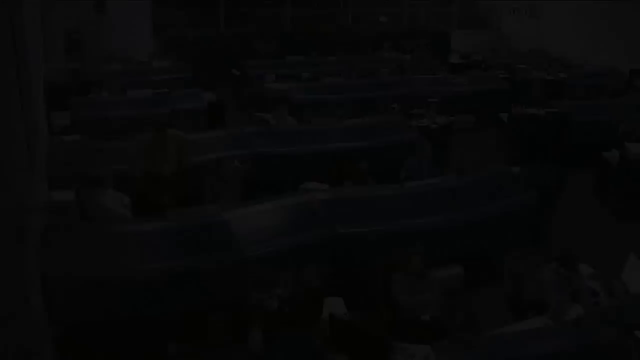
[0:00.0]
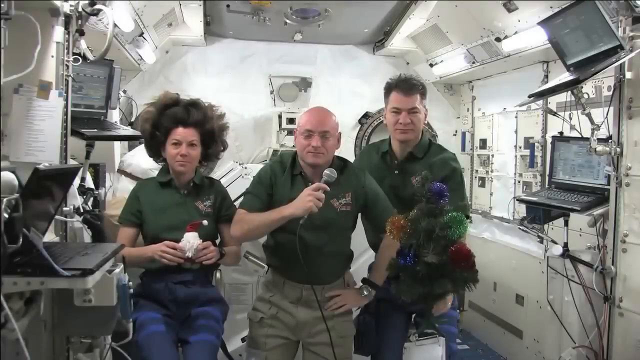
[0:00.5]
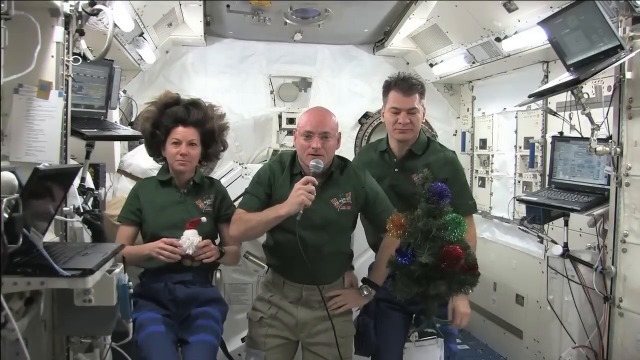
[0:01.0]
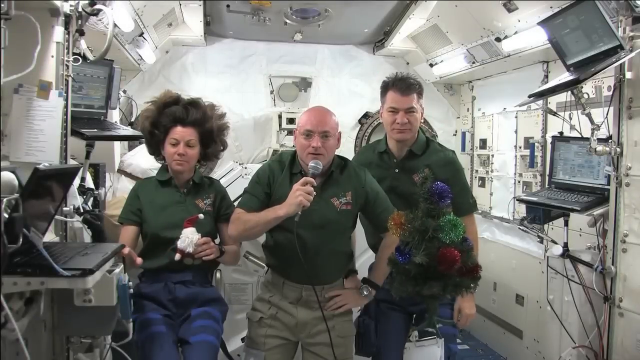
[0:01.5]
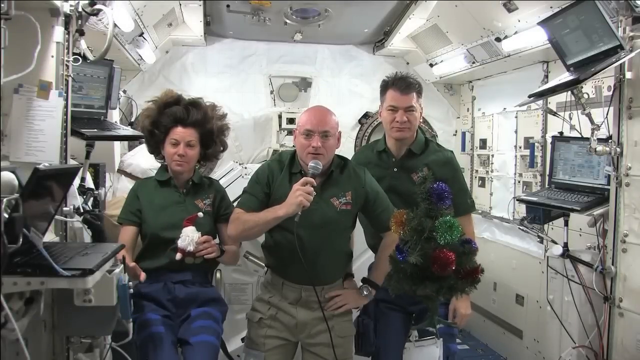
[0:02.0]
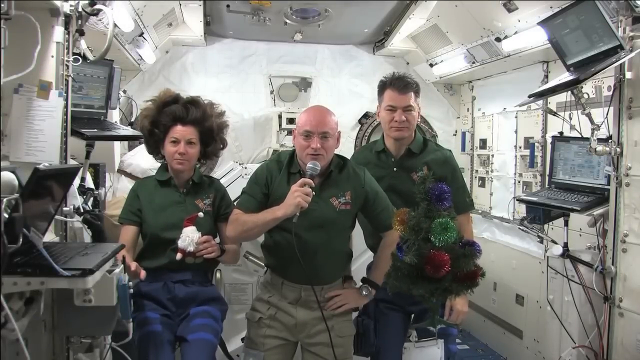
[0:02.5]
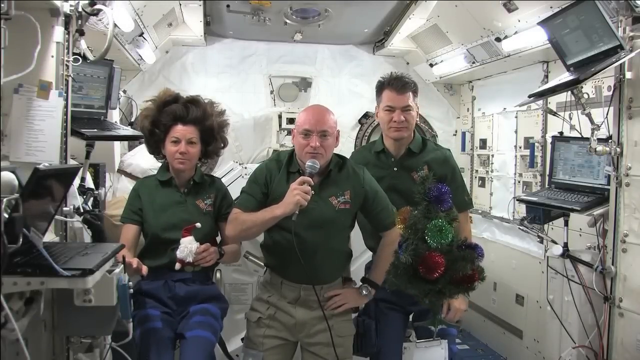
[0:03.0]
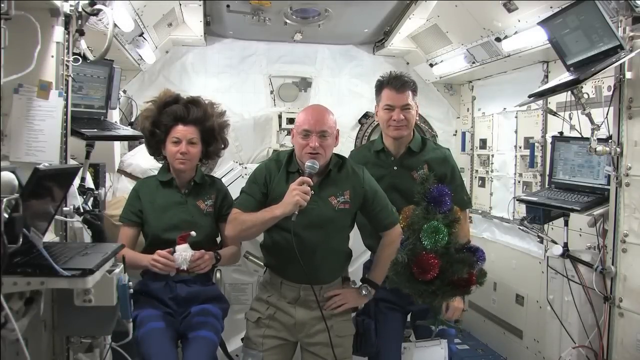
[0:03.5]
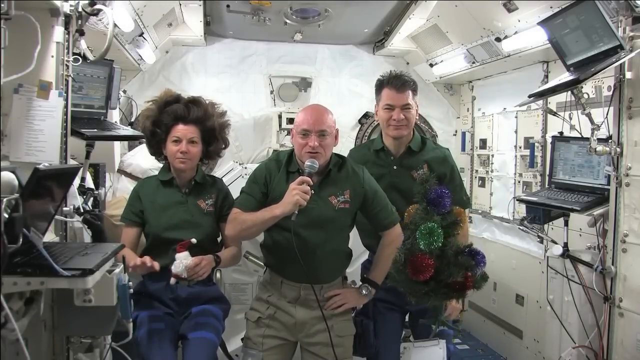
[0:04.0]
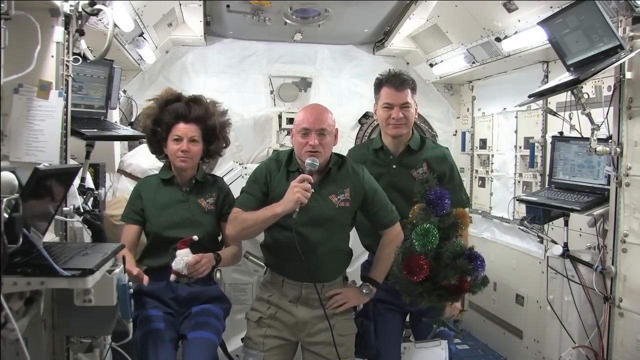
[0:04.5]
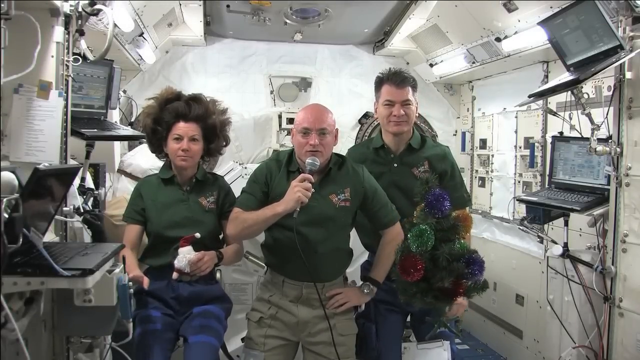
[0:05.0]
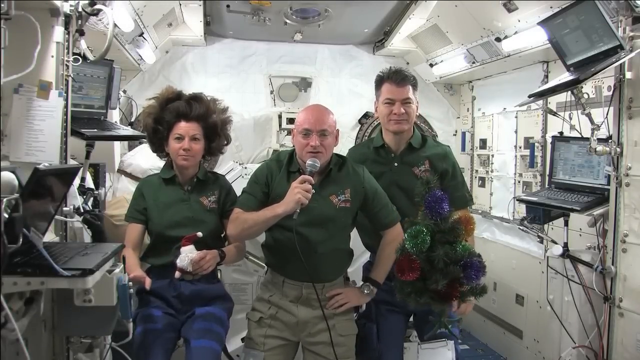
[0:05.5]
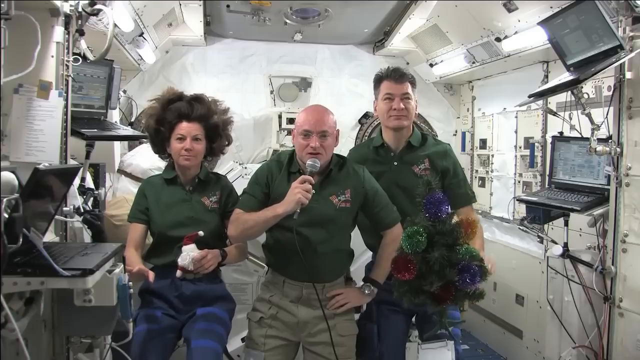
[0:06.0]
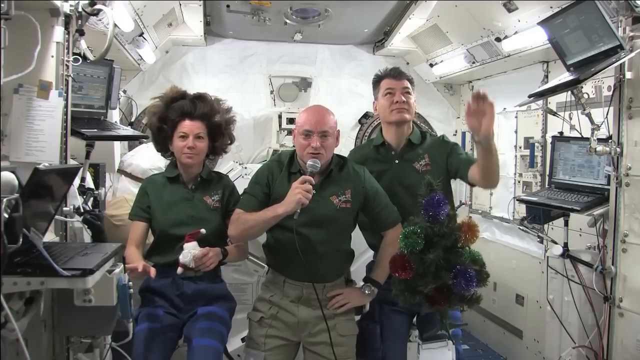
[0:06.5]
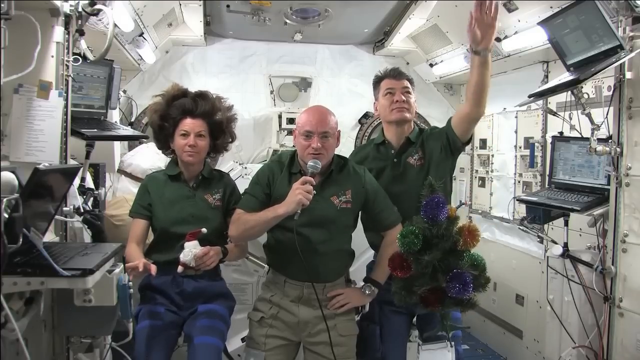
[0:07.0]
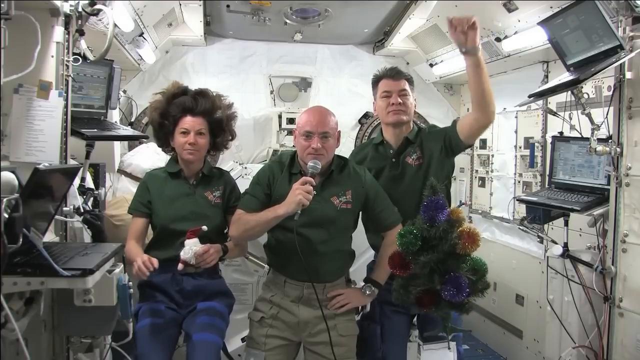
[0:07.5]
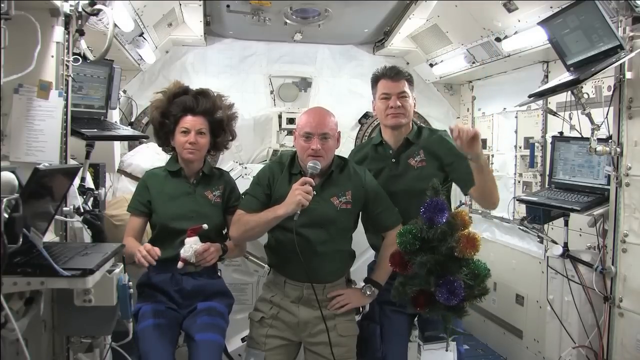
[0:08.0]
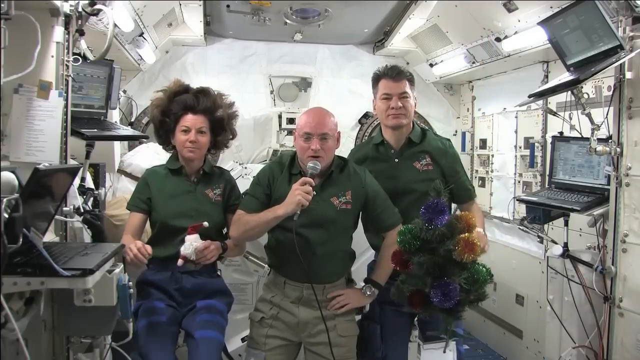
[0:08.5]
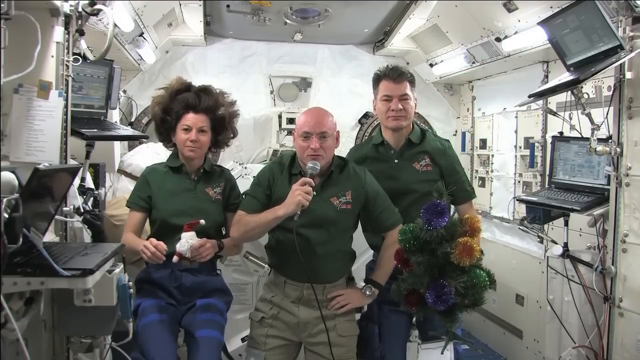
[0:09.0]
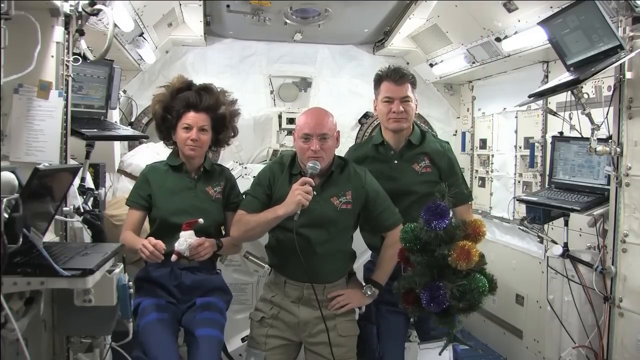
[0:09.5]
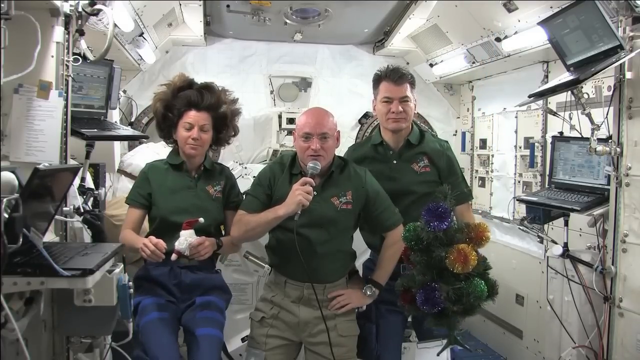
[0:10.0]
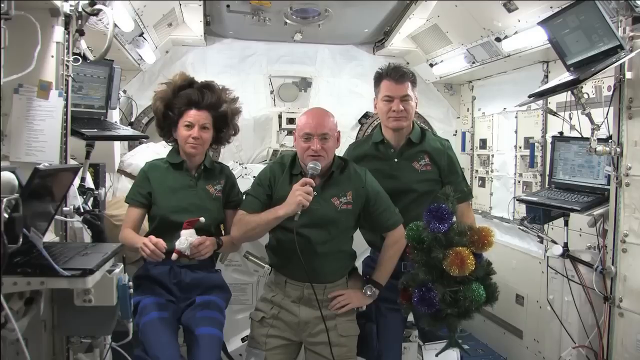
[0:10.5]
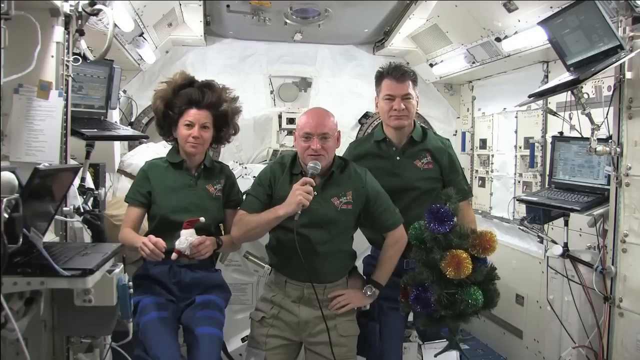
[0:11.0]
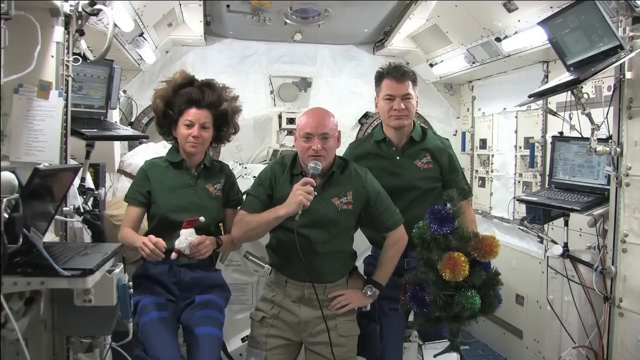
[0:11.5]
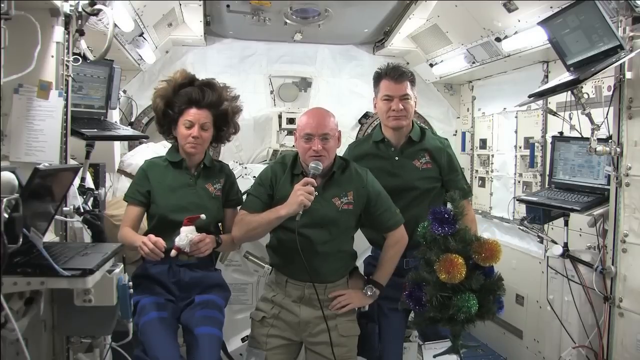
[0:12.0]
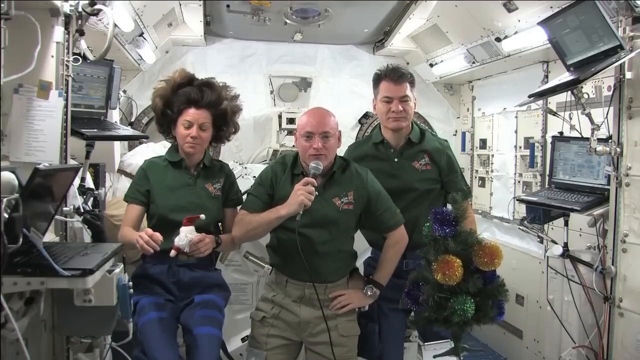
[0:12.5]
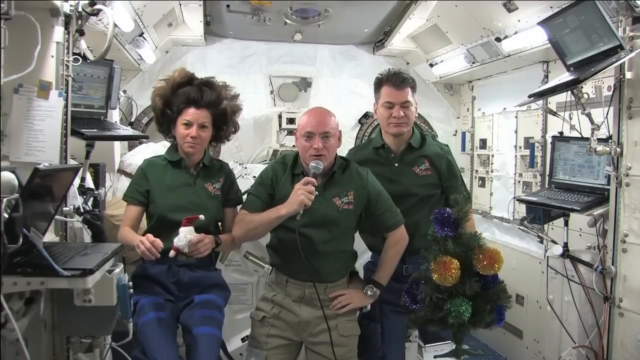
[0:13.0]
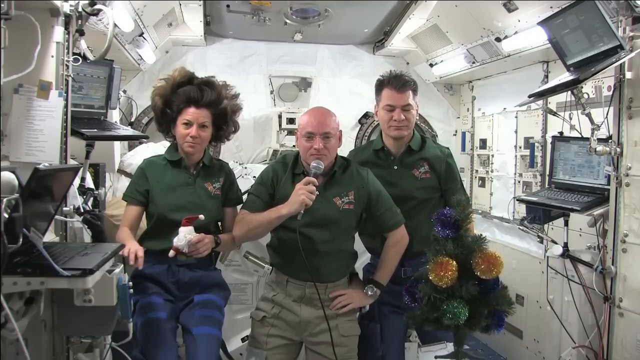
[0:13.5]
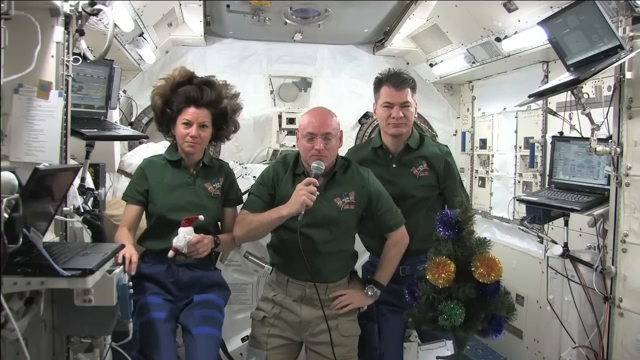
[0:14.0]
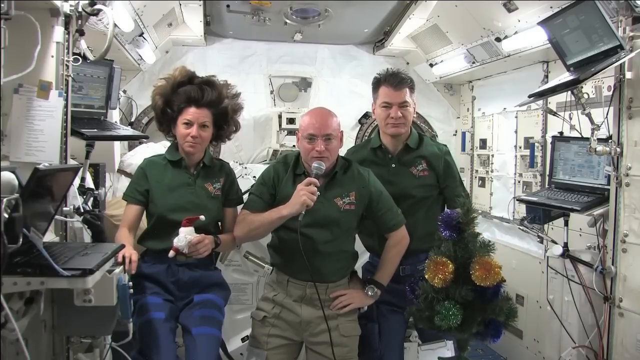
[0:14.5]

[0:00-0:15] Three people appear to be on a spaceship, floating, apparently in zero-g, and facing toward the camera. Numerous computer terminals and pieces of equipment are behind them. The person on the left is a woman whose hair floats around her head in the zero-g. She wears a dark green short-sleeved polo shirt with some sort of insignia over the right breast pocket; it is unclear what it says. She holds a small Santa Claus doll in her left hand and wears dark blue pants. The man in the middle is bald and wears a similar shirt with khaki pants, and he holds a microphone in his right hand and is talking. The third man is dressed in a similar fashion. At first he looks like he is holding a Christmas tree, but the tree is not being held by anybody; it is floating in the zero-g.